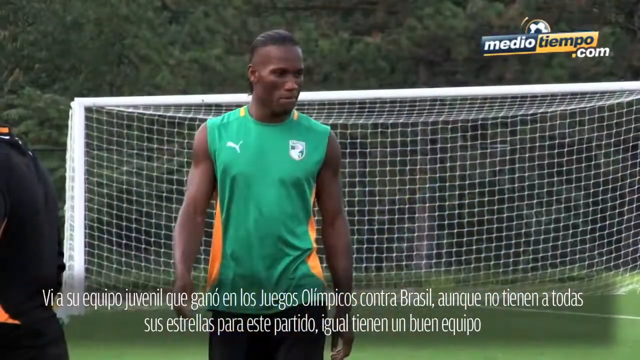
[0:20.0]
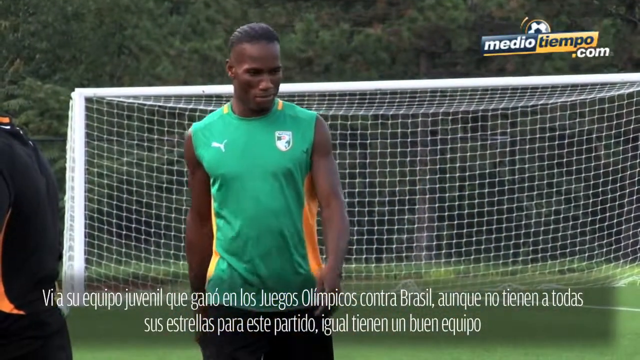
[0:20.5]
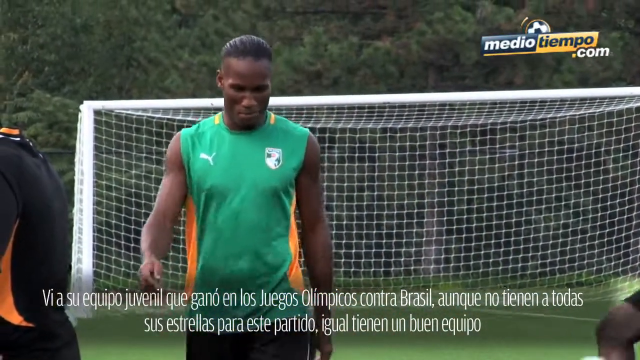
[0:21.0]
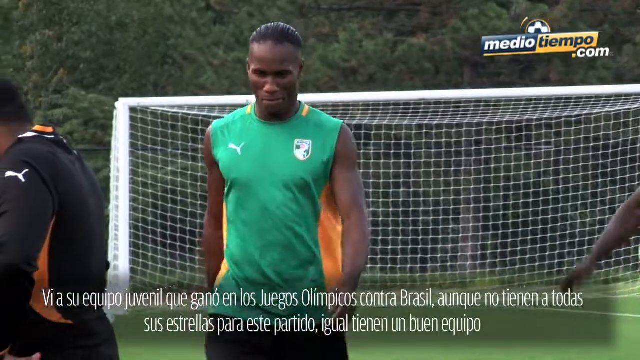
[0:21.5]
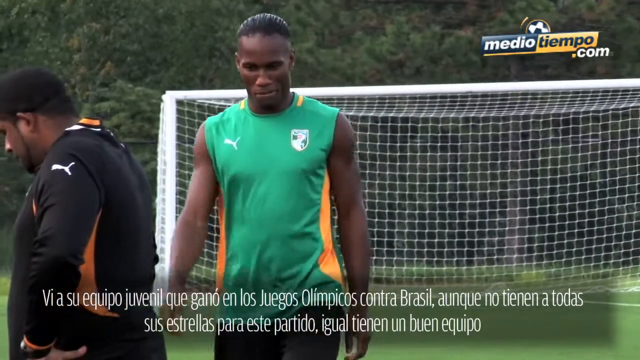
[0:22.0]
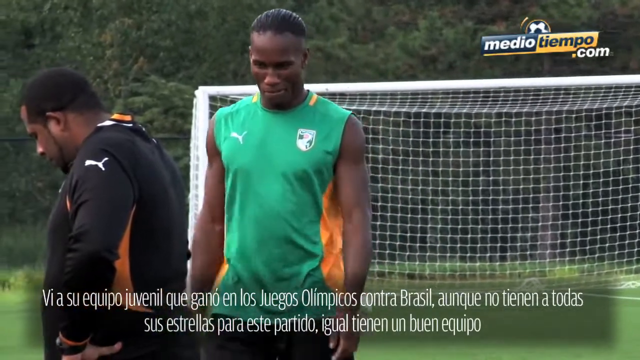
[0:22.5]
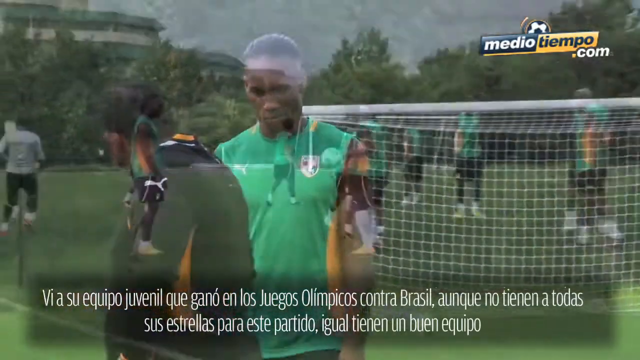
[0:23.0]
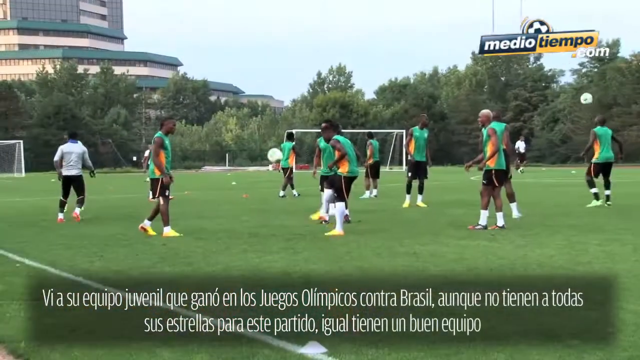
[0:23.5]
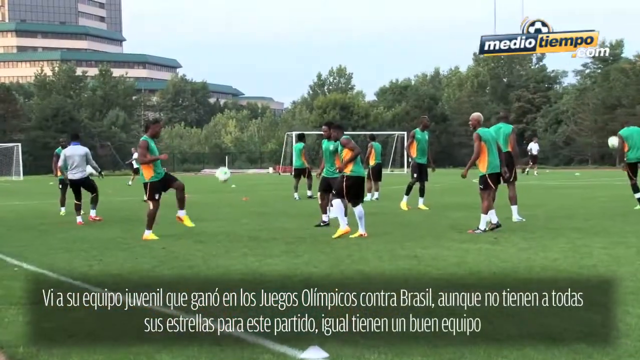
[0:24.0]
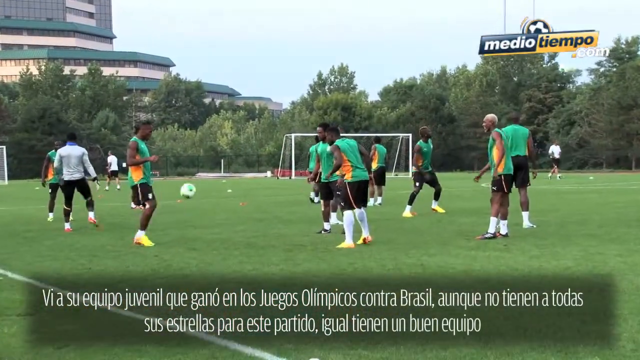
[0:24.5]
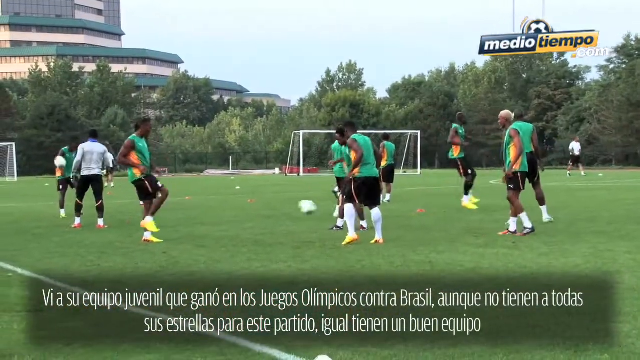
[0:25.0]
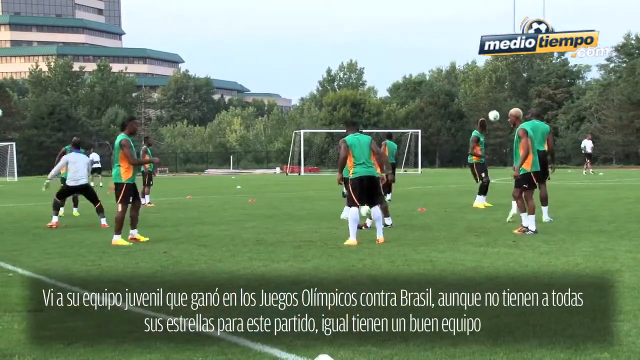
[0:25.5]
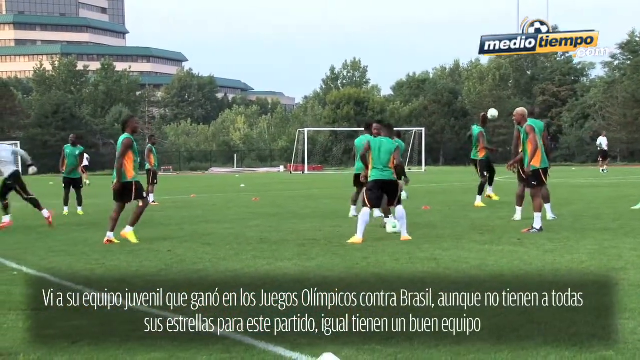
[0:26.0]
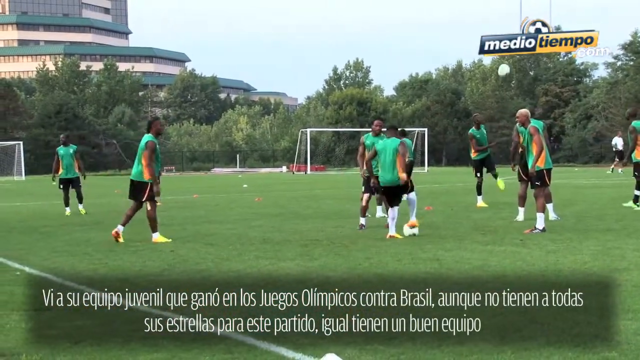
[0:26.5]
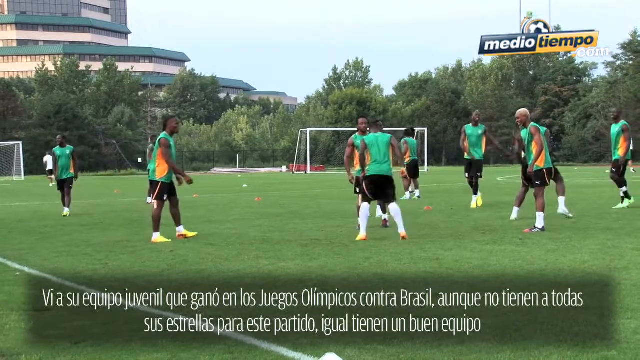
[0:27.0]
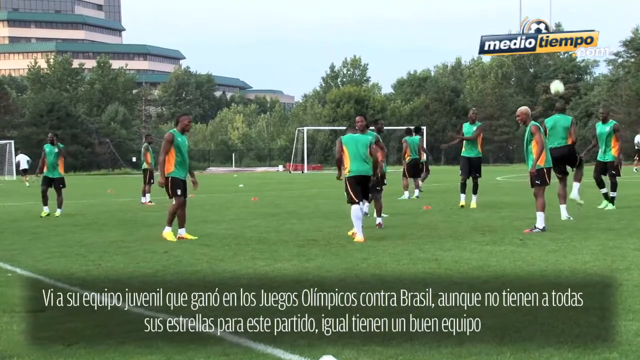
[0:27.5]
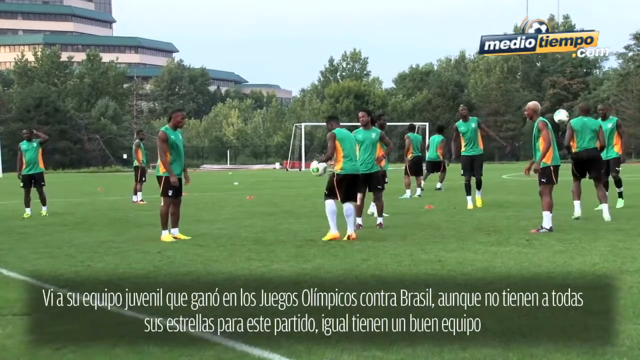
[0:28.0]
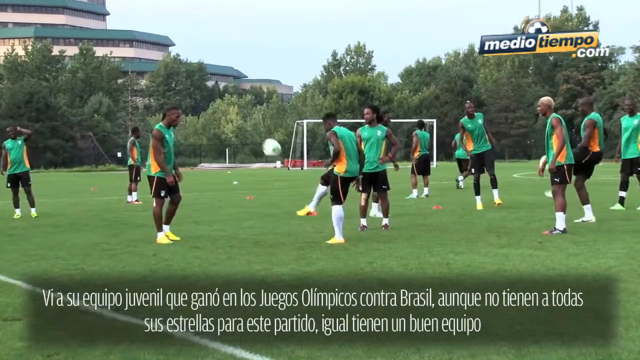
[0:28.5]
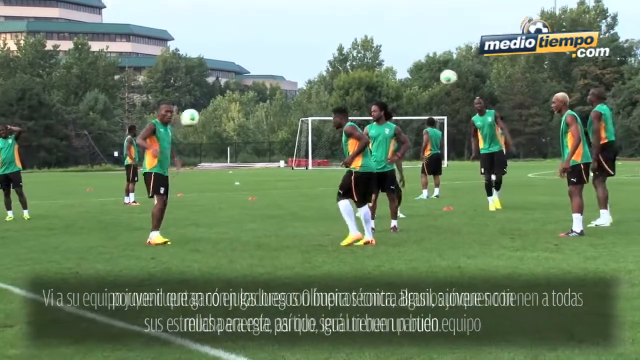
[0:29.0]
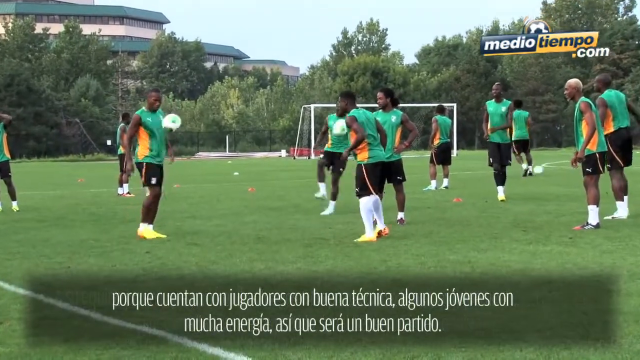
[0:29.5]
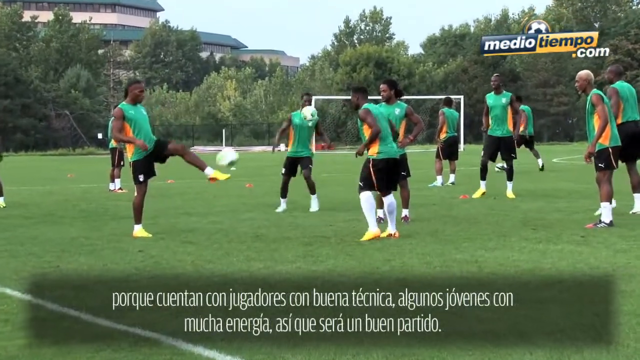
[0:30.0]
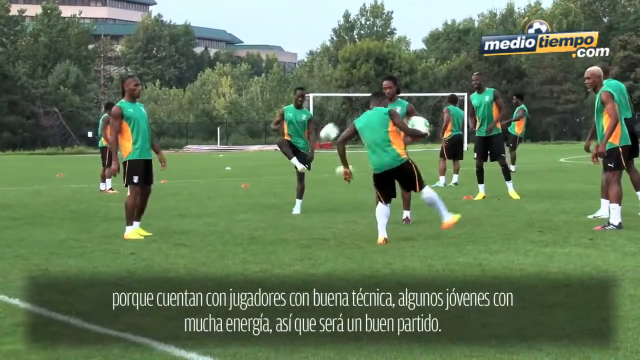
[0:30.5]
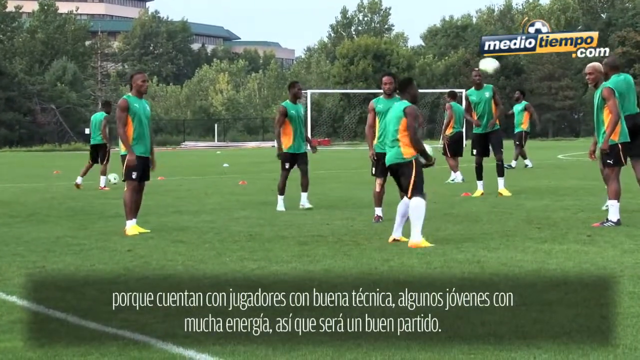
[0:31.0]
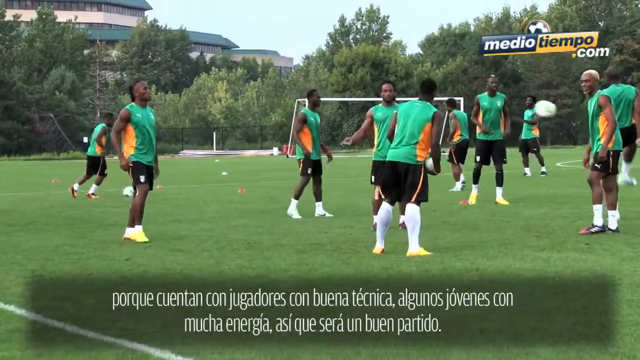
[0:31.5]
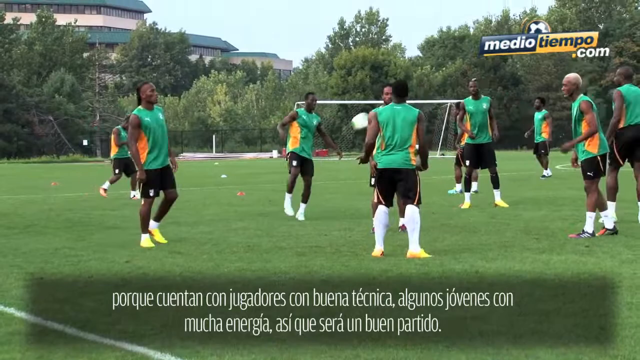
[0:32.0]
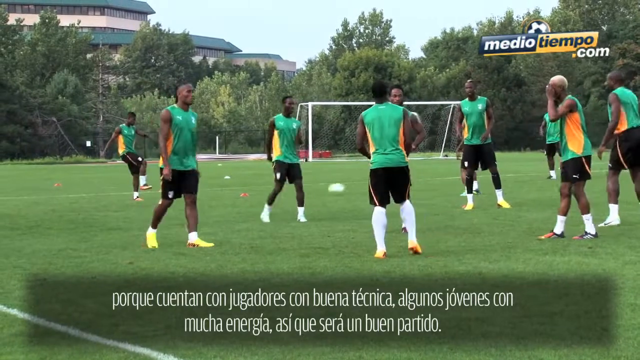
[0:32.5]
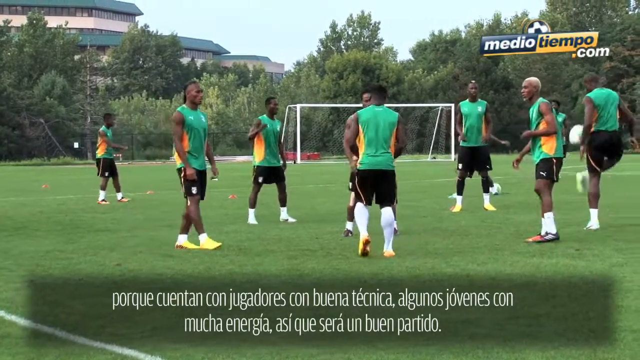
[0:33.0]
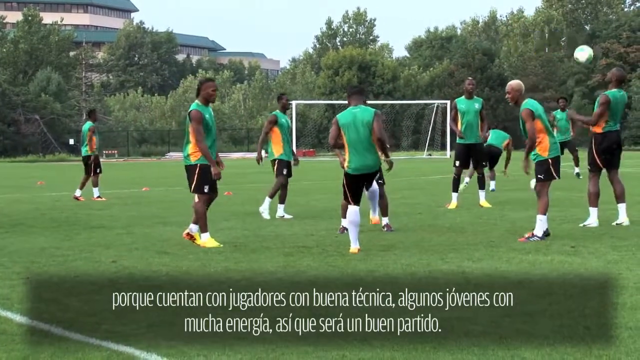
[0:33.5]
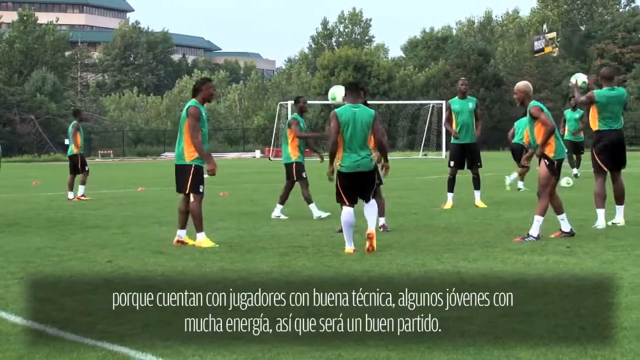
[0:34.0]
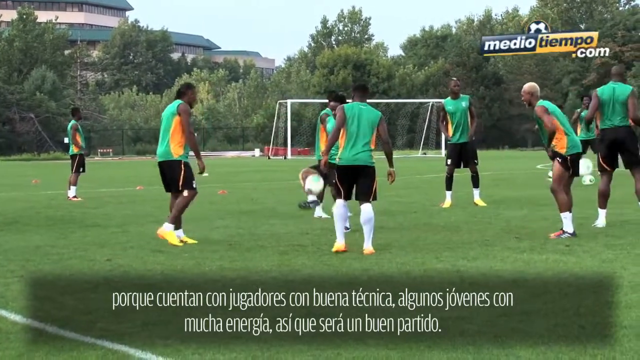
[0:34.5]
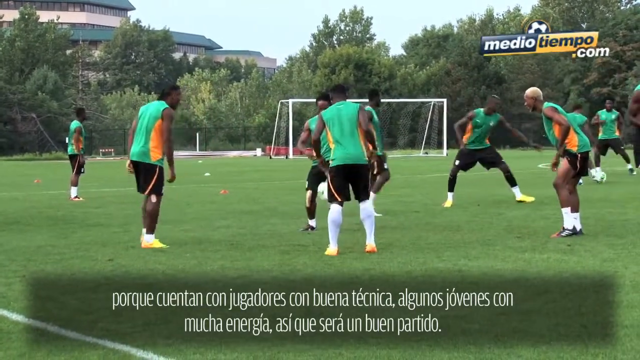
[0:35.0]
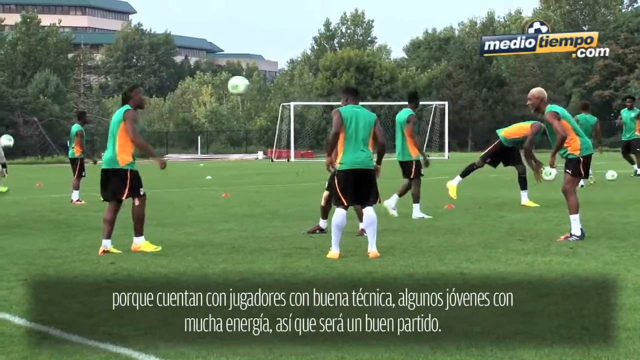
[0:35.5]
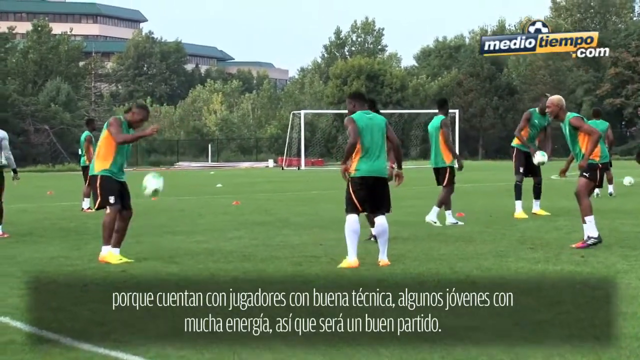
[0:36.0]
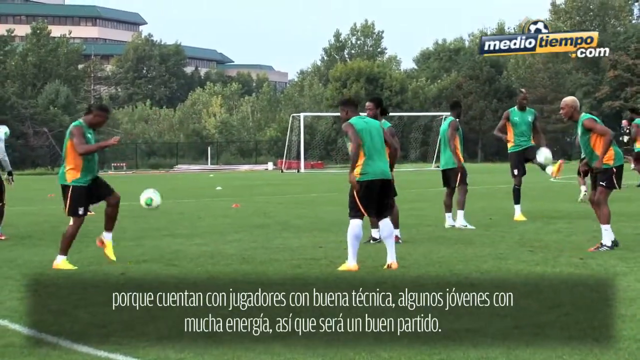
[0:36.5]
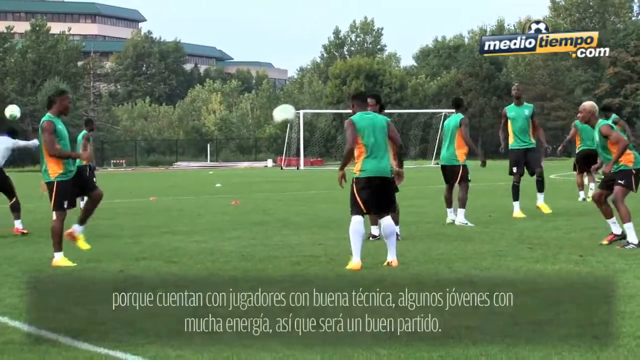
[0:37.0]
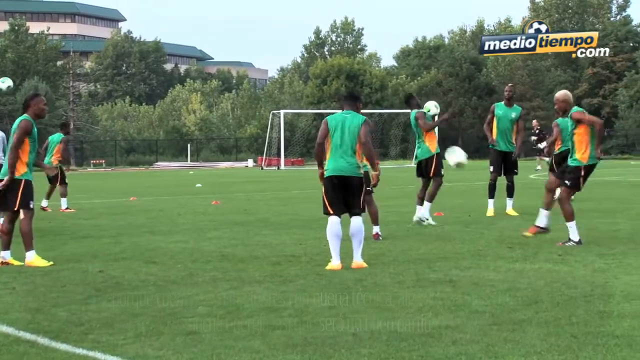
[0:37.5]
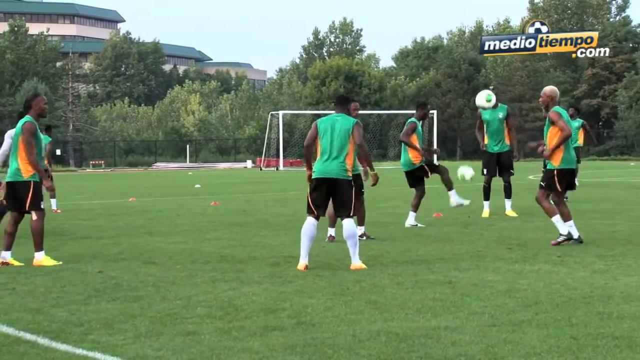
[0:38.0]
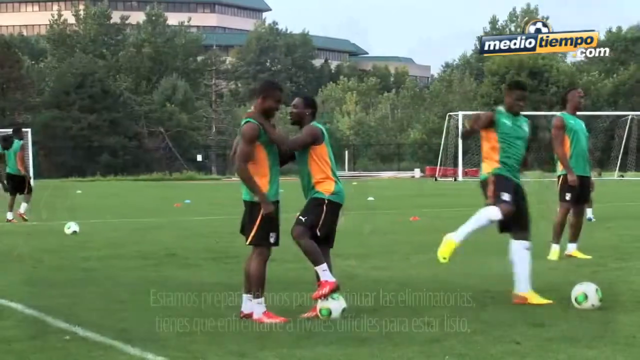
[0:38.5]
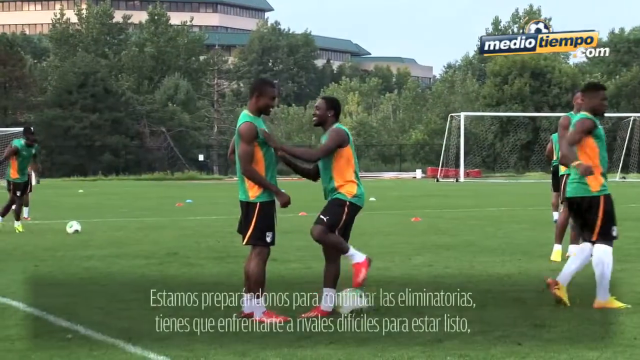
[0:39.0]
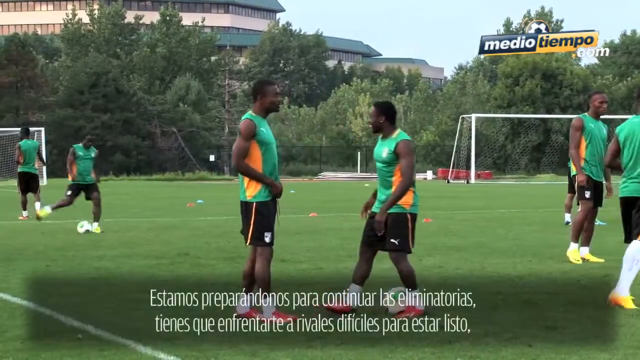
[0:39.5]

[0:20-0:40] A man in a green tank top walks toward the camera with his head down, looking at the ground. Behind him is a soccer net, almost like a soccer goal net, and there is wording at the bottom of the frame. A soccer ball comes into view. A man on the left-hand side is looking down and facing toward the left. A bunch of men are on a soccer field kicking soccer balls around; each man looks like he is paired up with another, and each pair kicks its own soccer ball. Some of the men kick the ball straight up in the air.